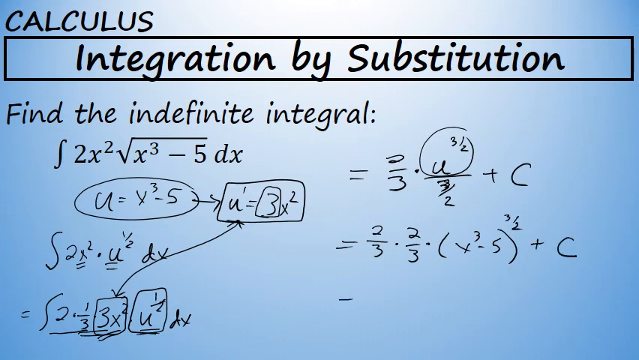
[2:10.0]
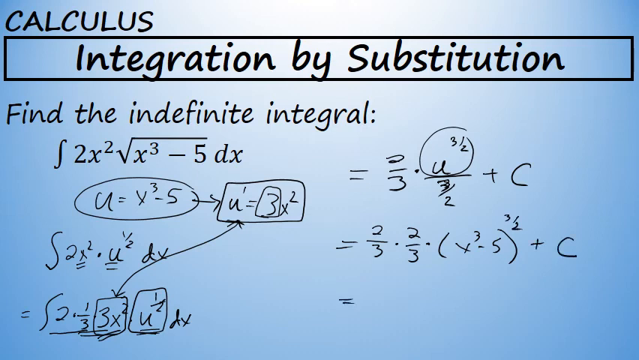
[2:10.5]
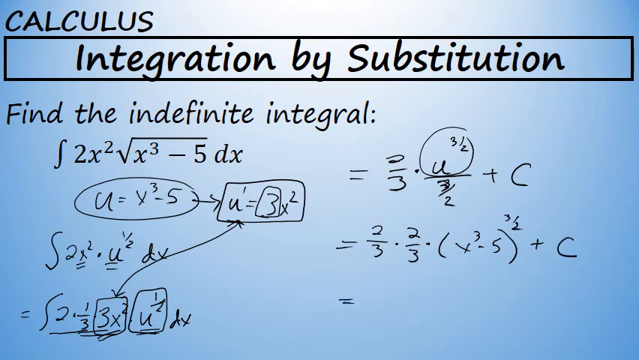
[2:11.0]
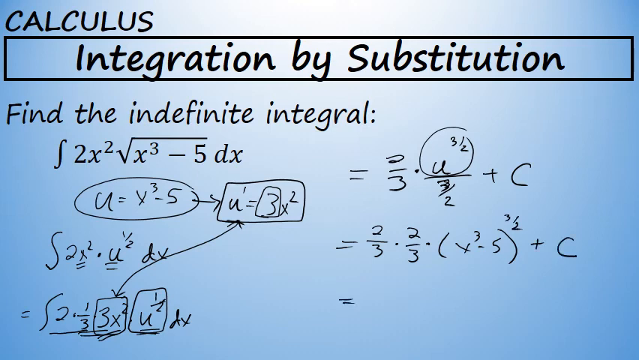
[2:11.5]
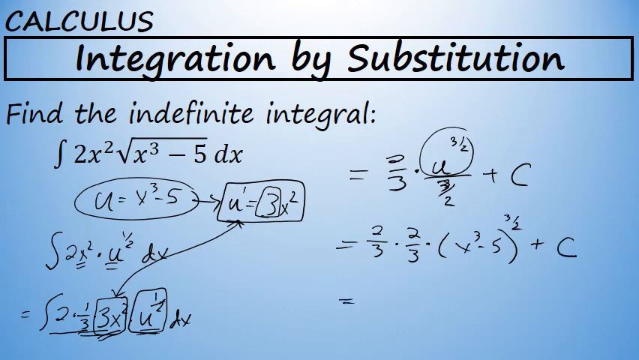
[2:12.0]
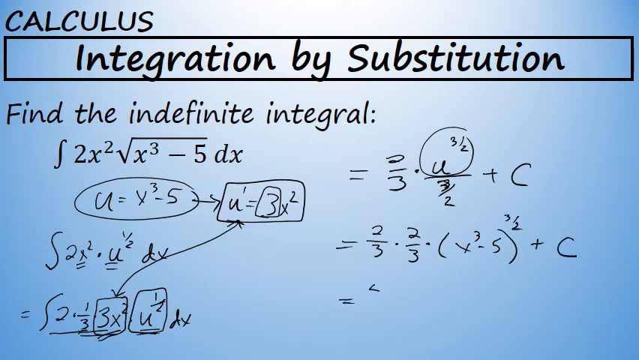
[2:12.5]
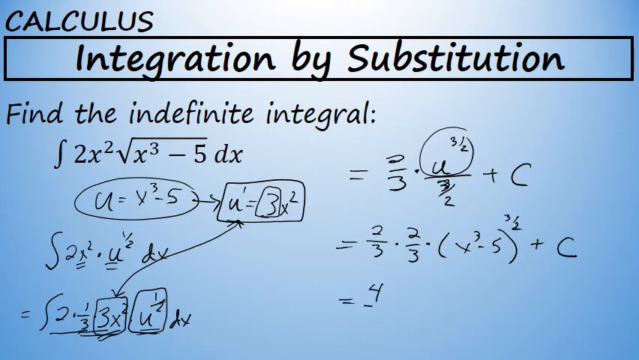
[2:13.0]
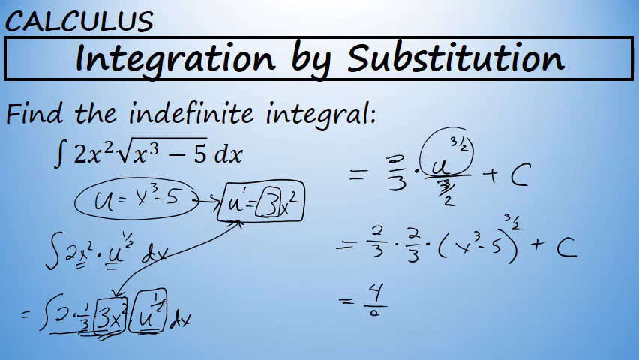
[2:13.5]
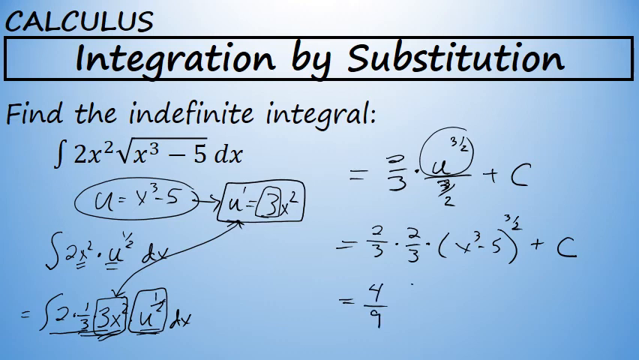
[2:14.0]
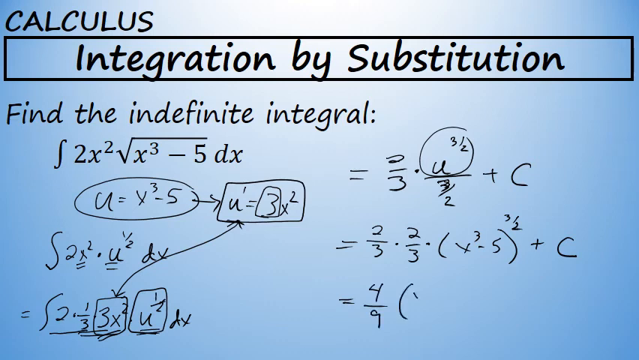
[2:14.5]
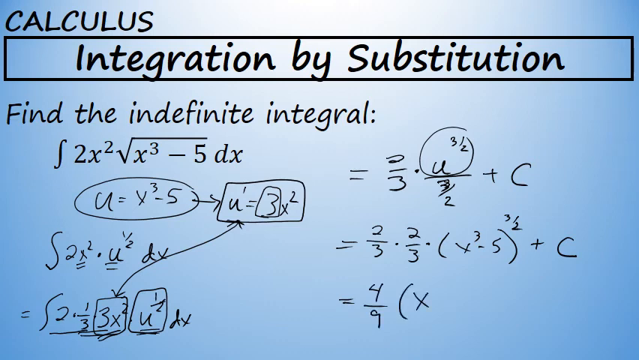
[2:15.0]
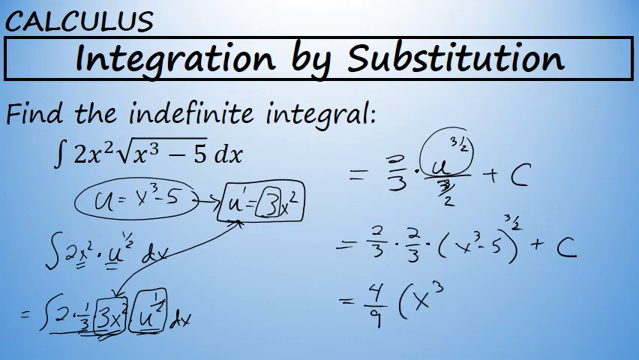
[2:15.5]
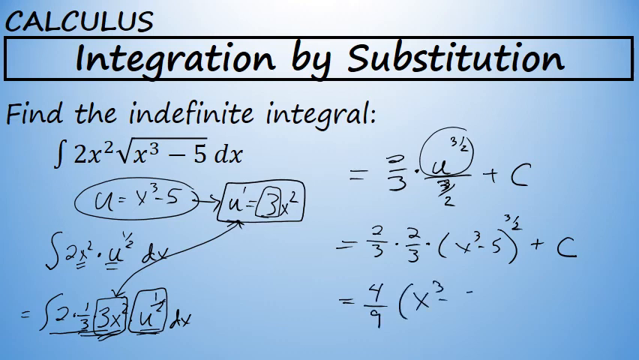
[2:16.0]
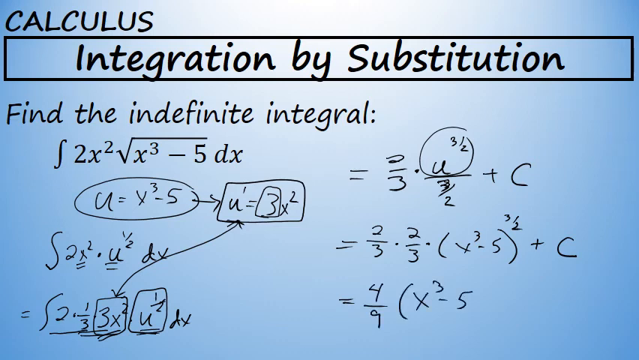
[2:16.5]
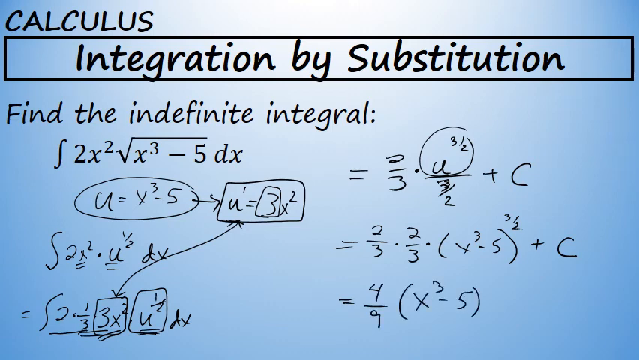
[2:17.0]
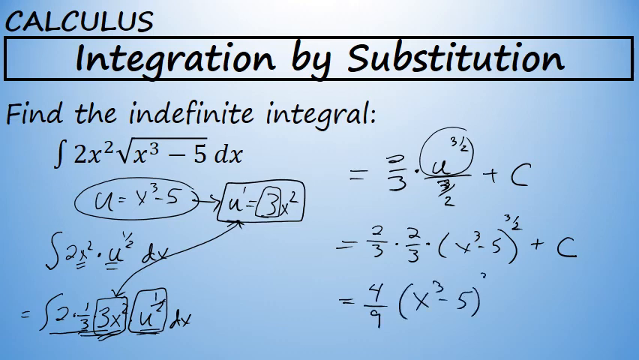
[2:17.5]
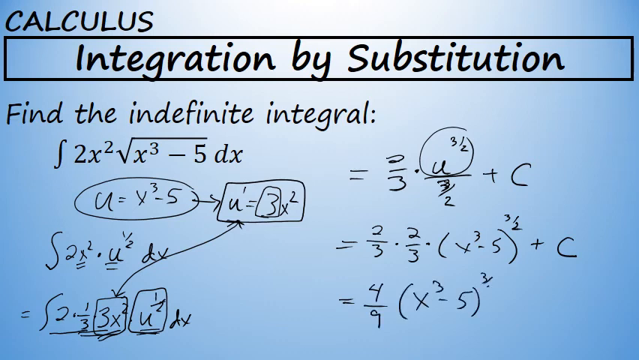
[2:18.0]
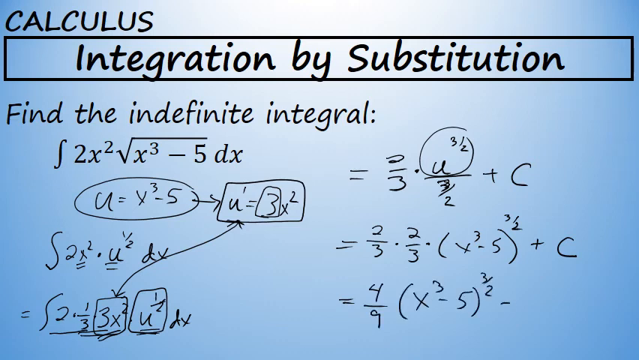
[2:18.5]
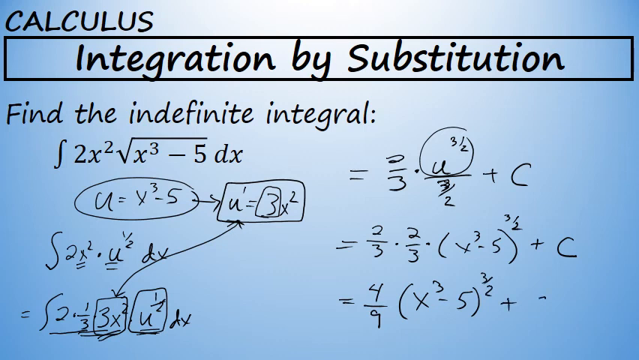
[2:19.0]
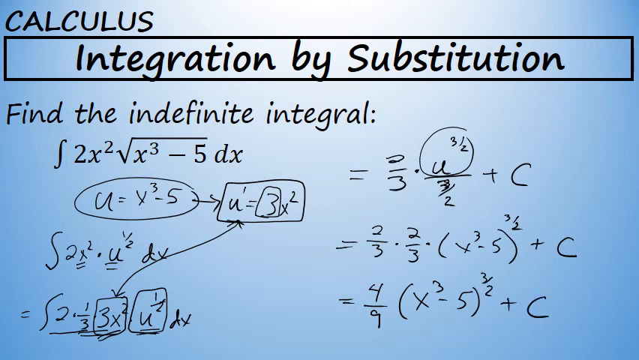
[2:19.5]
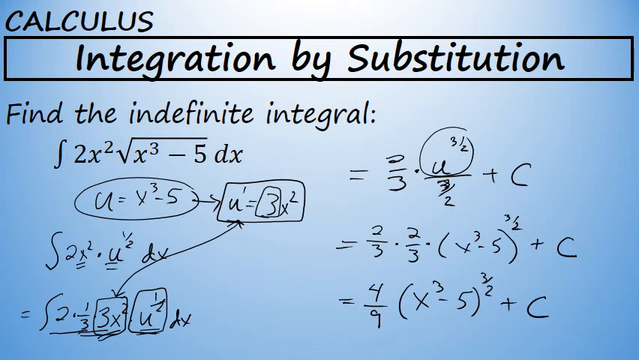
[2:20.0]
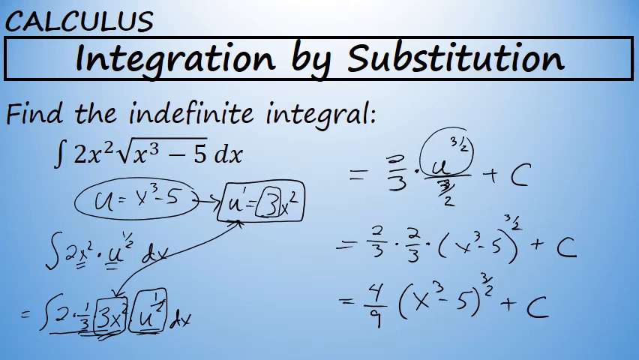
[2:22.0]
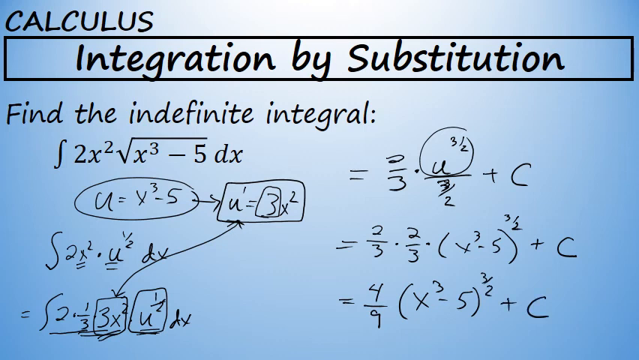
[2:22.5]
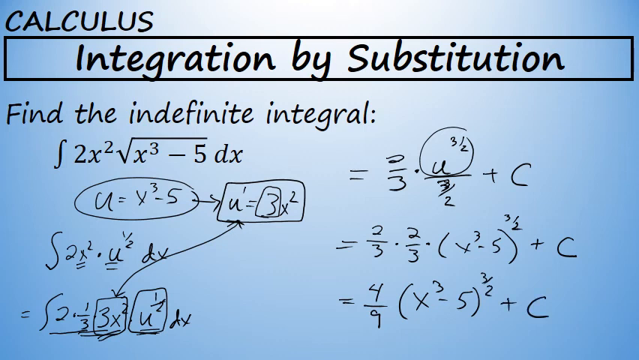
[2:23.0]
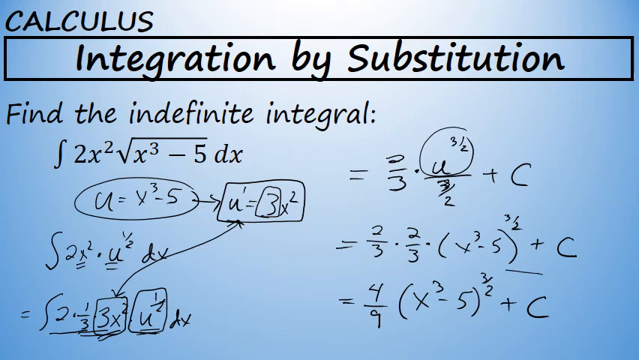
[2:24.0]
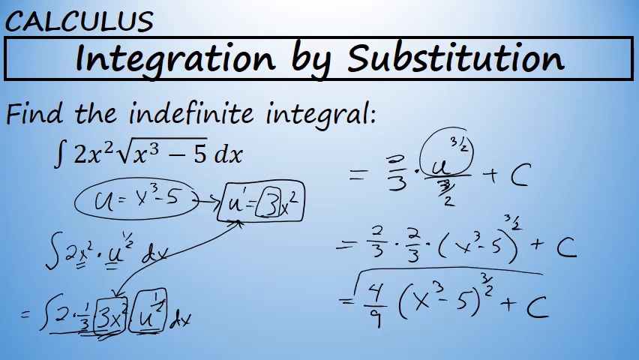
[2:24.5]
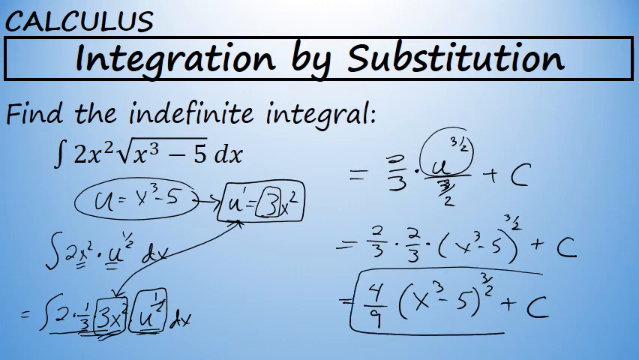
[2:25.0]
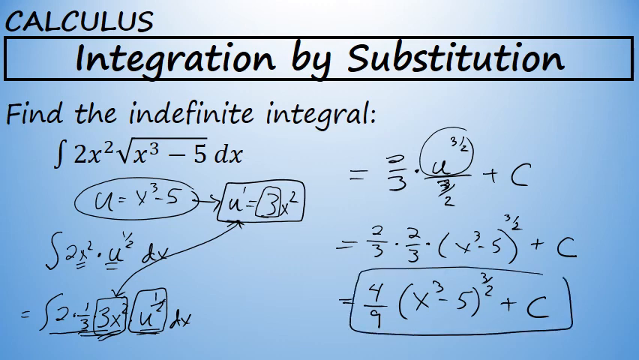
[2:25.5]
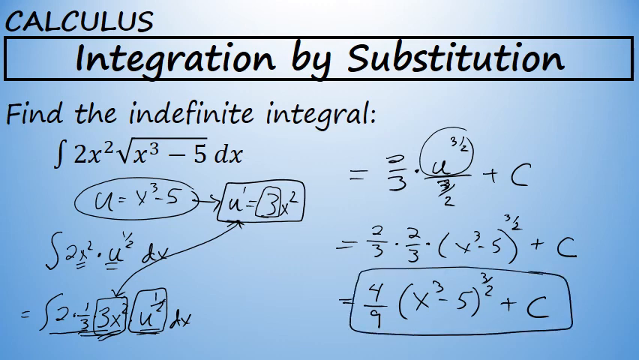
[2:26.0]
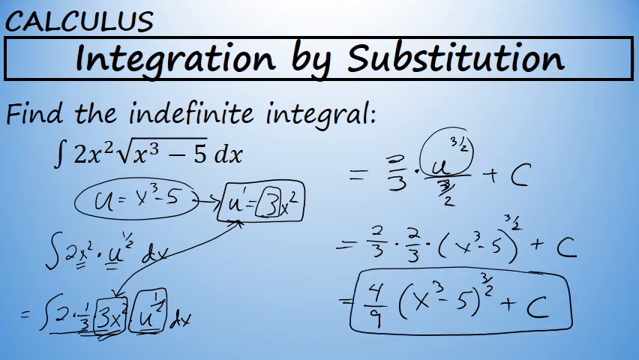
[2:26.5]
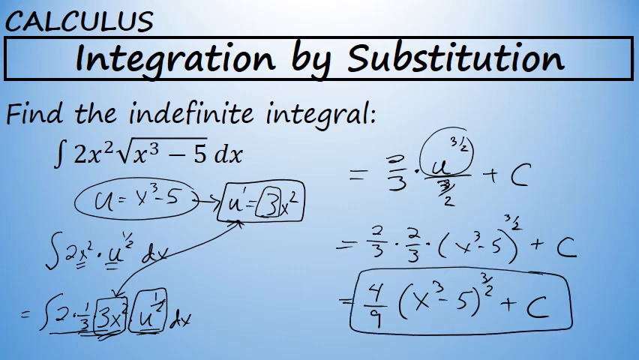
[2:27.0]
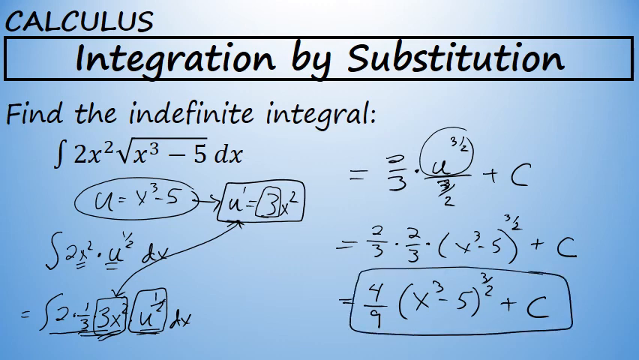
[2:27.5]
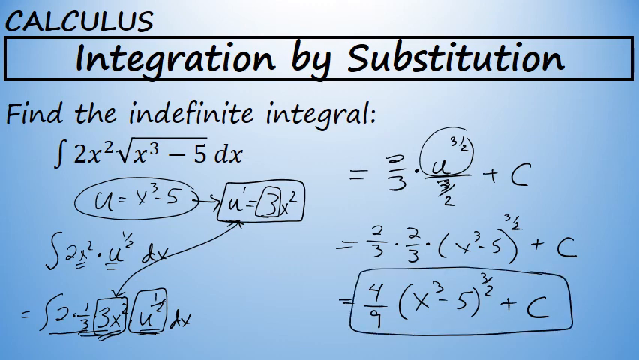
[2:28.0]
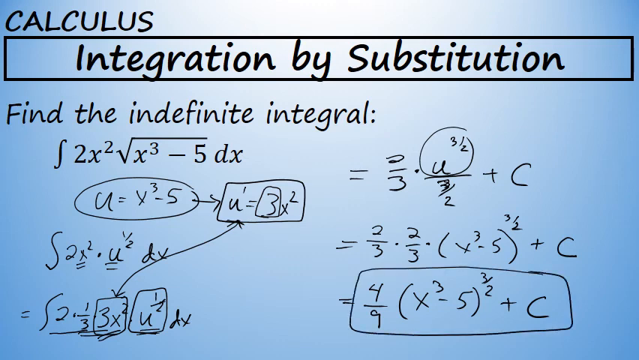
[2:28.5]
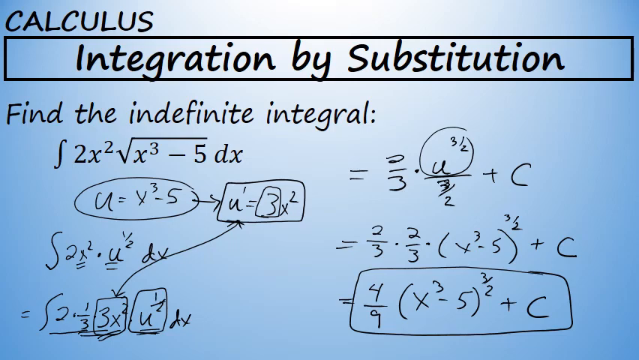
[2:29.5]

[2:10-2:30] The screen is blue, growing lighter toward the middle. In the top left-hand corner is the word "calculus" in black. Beneath it a horizontal rectangle runs the length of the whole screen, containing "integration by substitution" in black, with "find the indefinite integral" below it. Underneath is 2x superscript 2, long division sign, x superscript 3 minus 5 dx, and below that someone has worked on the equation: u equals x superscript 3 minus 5, an arrow going to the right, and u equals 3x superscript 2. Under that is 2x superscript 2 decimal u 1 half dx, then 2 decimal 1/3 3x superscript 2 u half dx, with an arrow drawn from the 3x in that equation to the 3x in the top equation. To the right someone has written equals 2/3 decimal u plus c, beneath it equals 2/3 decimal 2/3, then in parentheses x superscript 3 minus 5 plus c, and beneath that equals 4 over 9, then in parentheses x superscript 3 minus 5, 3/2 plus c.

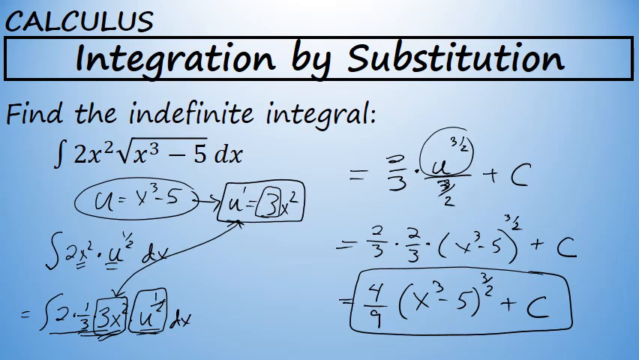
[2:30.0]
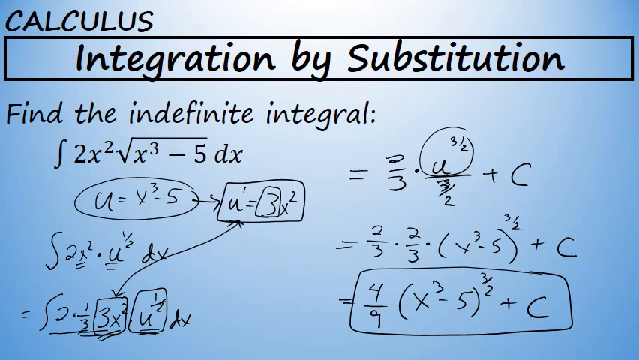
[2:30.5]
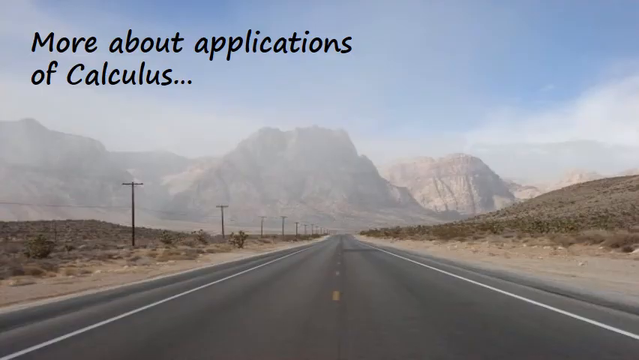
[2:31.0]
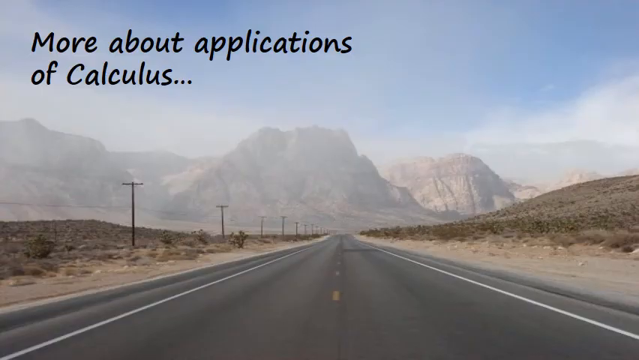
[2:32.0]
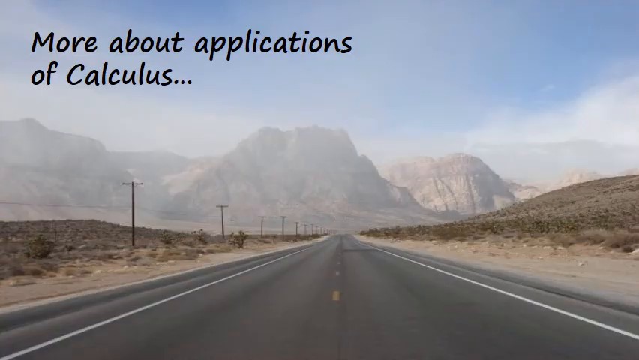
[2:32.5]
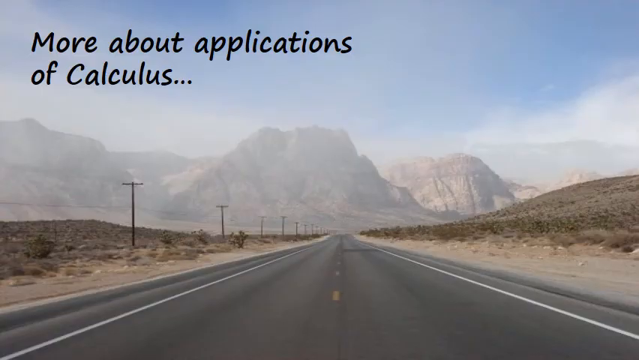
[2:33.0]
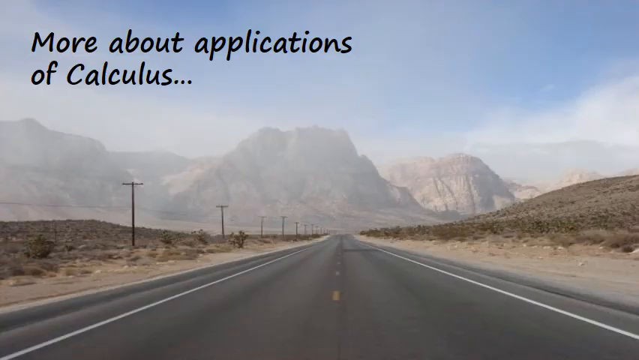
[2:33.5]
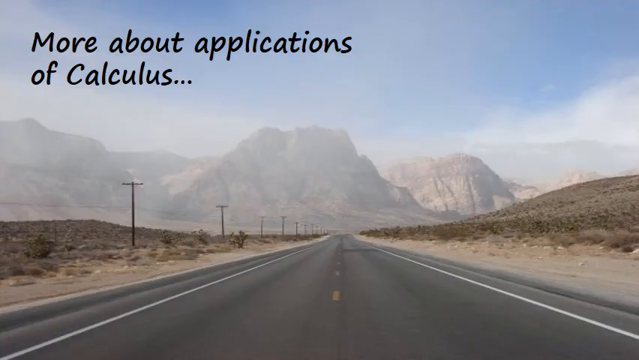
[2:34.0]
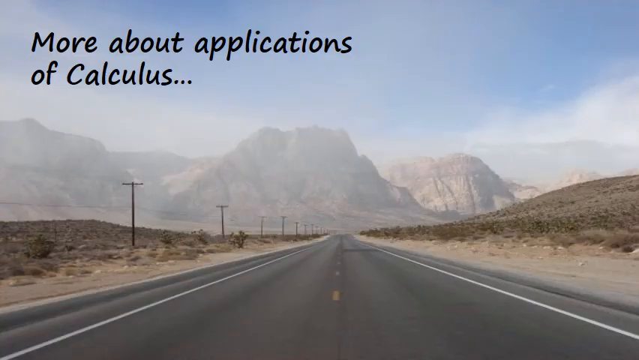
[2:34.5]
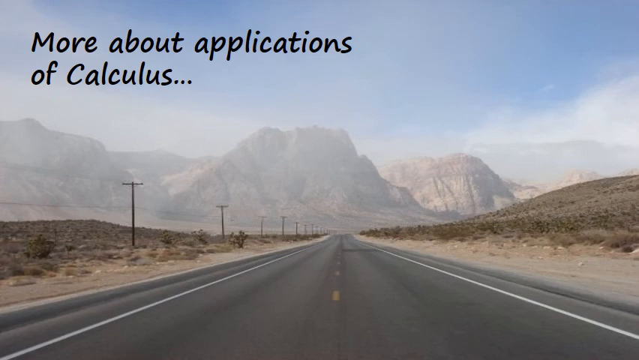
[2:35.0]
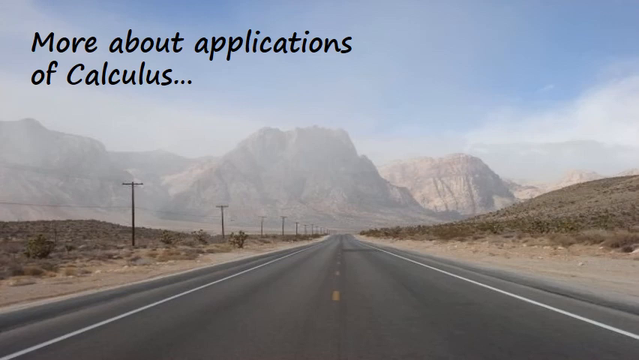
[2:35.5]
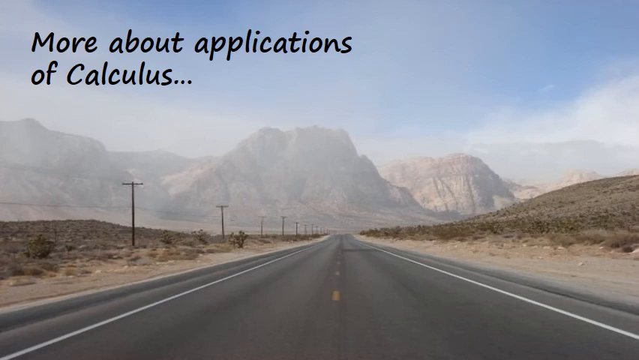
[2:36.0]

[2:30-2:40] A picture of a landscape, taken standing in the middle of a street, appears. Right in front of the camera a paved street goes as far as the eye can see, with a yellow dotted line in the middle and two white lines on the sides for the shoulders. On the left side of the street are telephone poles about every hundred yards with telephone wires going to each of them, and on the right side there is dirt and some dirt hills going on forever. At the end of the street are large light brown mountains with fog all around them, and blue sky, with everything foggy in the distance. In the top left-hand corner of the screen, written in black, is "more about applications of calculus".